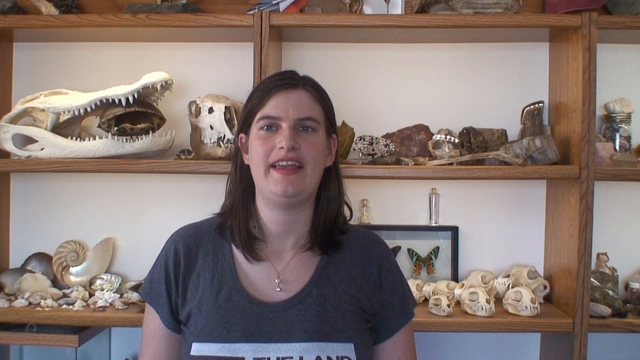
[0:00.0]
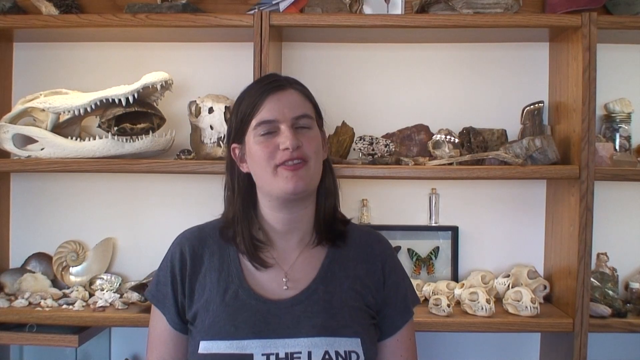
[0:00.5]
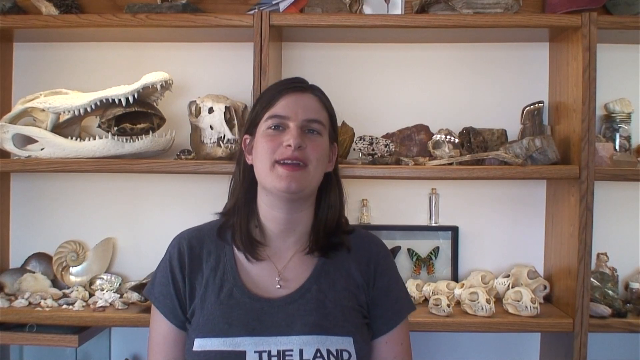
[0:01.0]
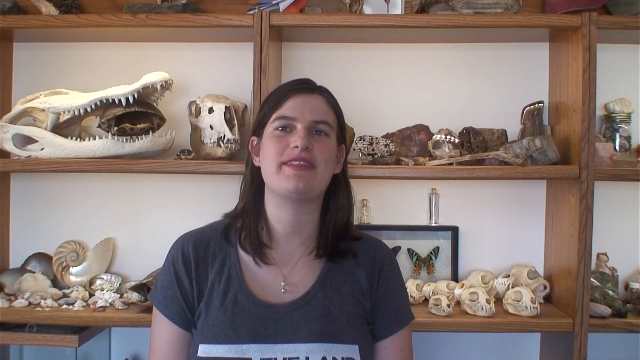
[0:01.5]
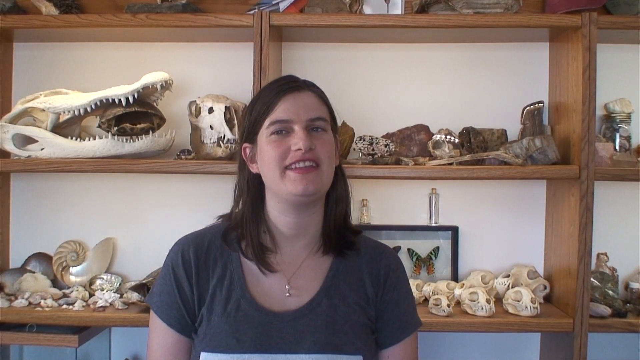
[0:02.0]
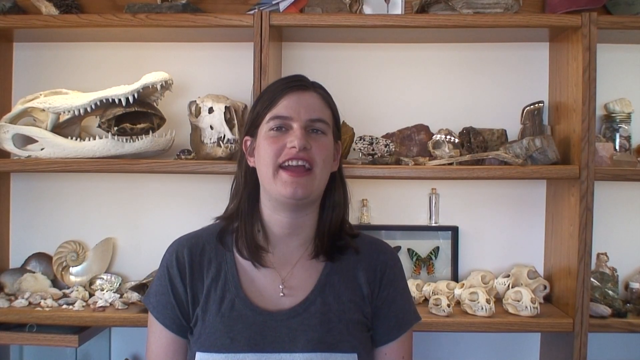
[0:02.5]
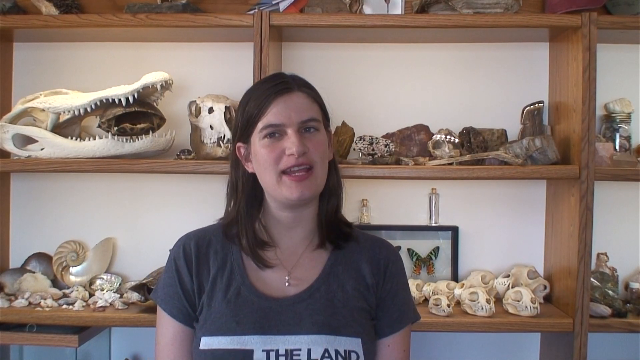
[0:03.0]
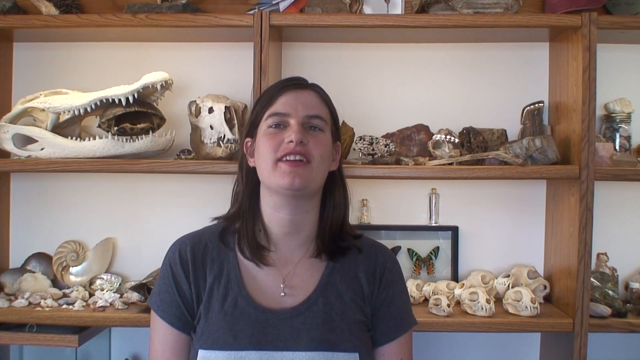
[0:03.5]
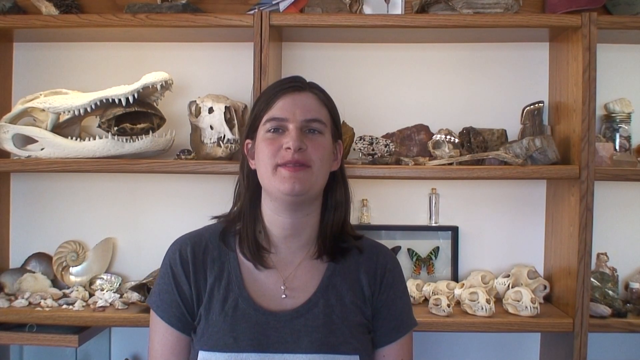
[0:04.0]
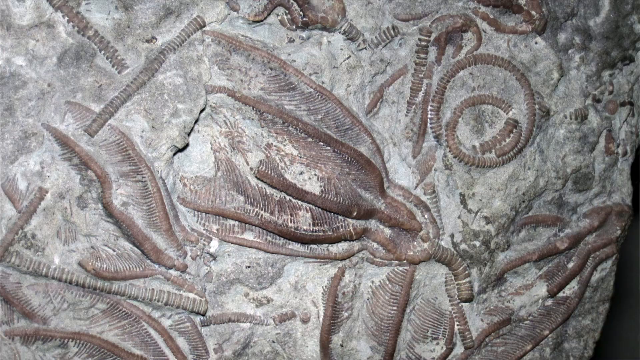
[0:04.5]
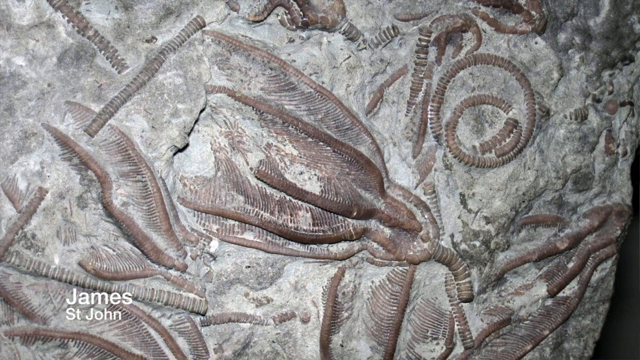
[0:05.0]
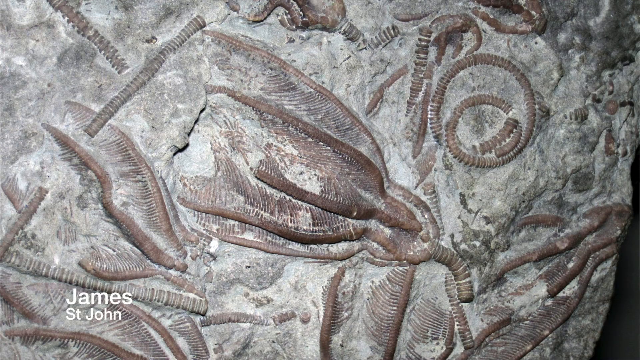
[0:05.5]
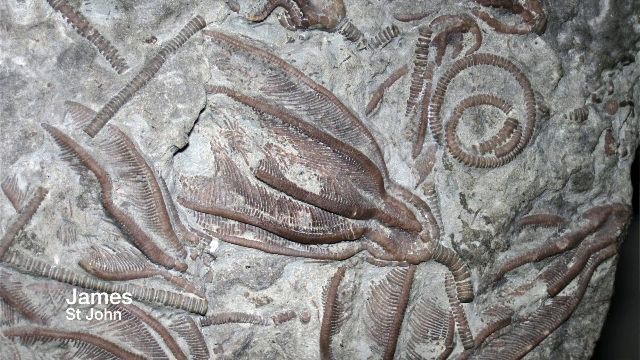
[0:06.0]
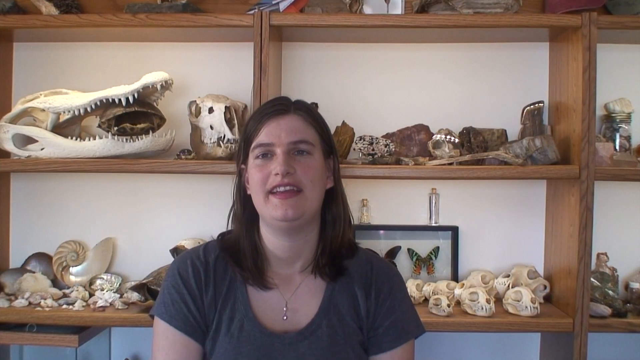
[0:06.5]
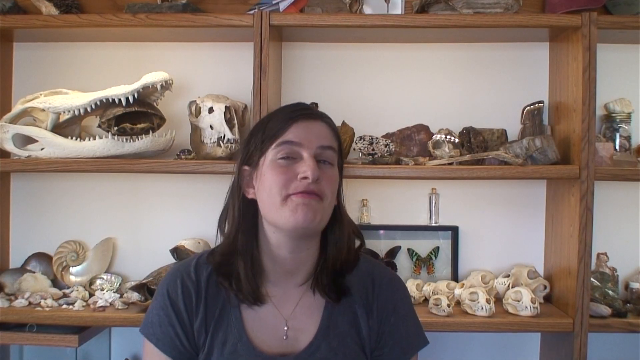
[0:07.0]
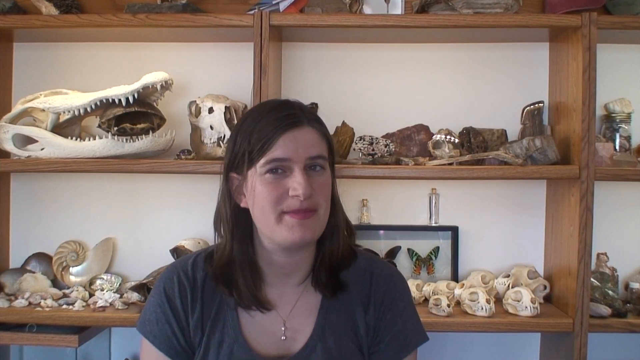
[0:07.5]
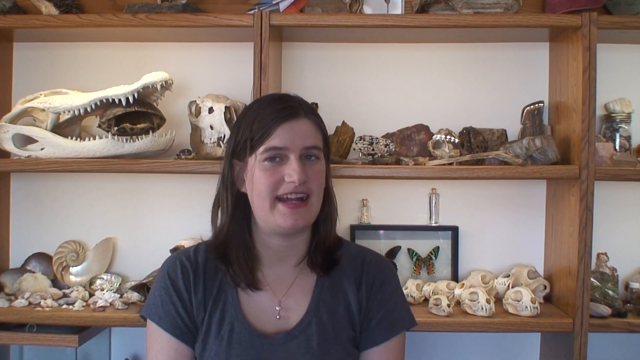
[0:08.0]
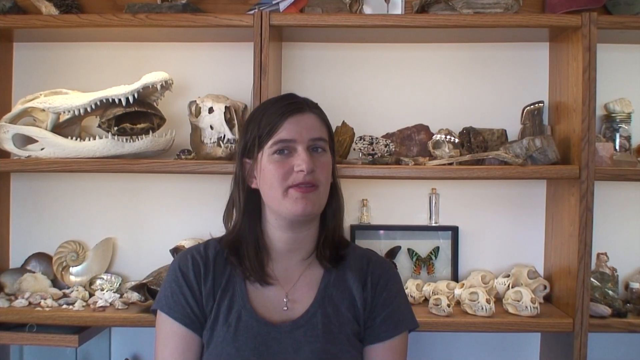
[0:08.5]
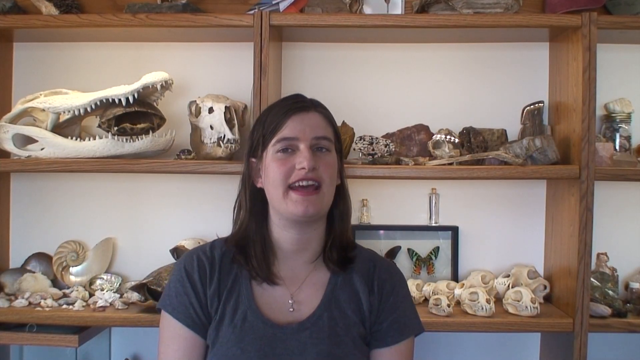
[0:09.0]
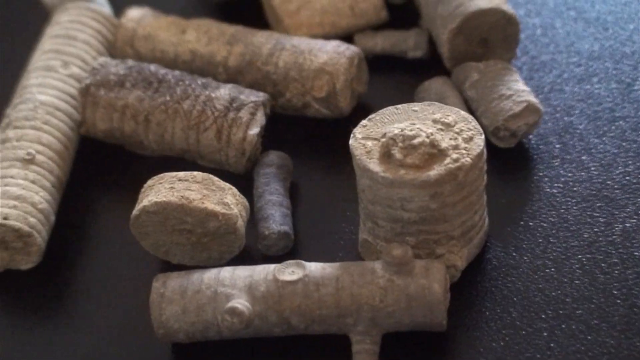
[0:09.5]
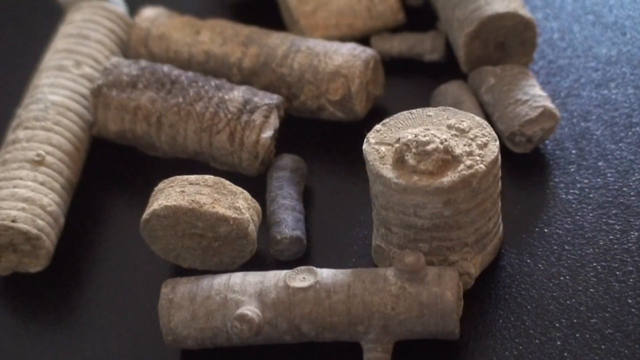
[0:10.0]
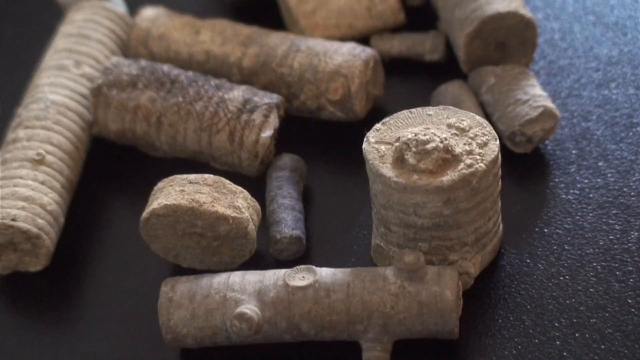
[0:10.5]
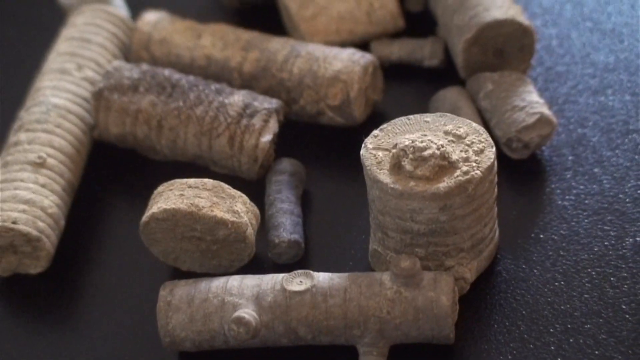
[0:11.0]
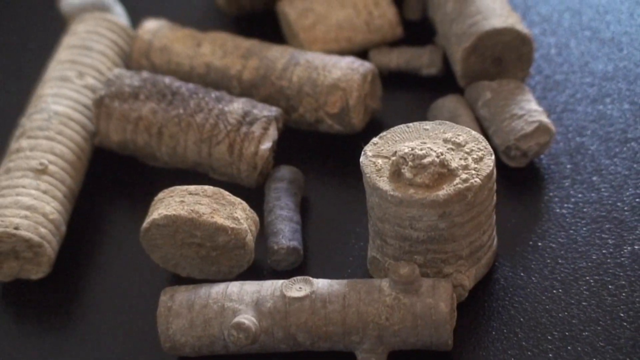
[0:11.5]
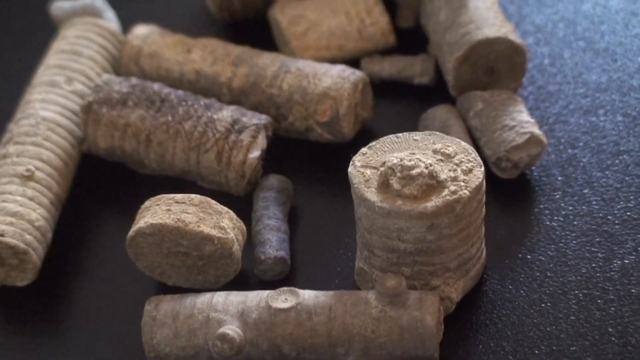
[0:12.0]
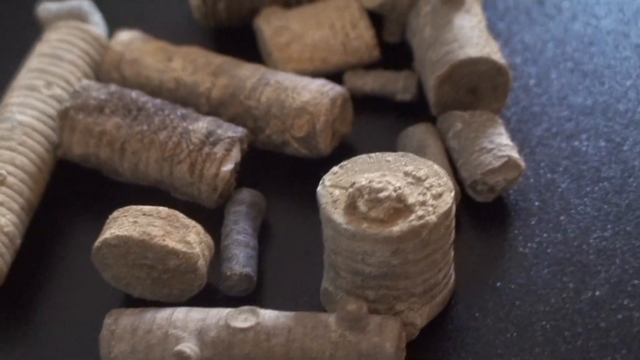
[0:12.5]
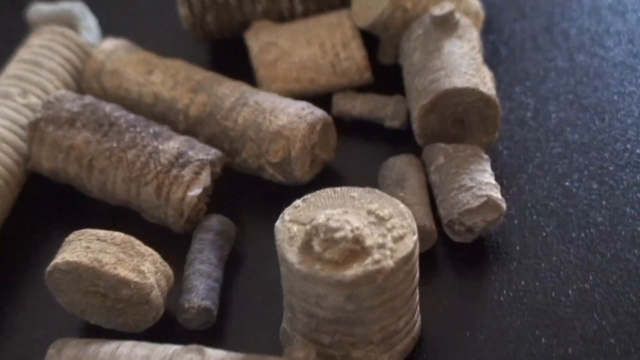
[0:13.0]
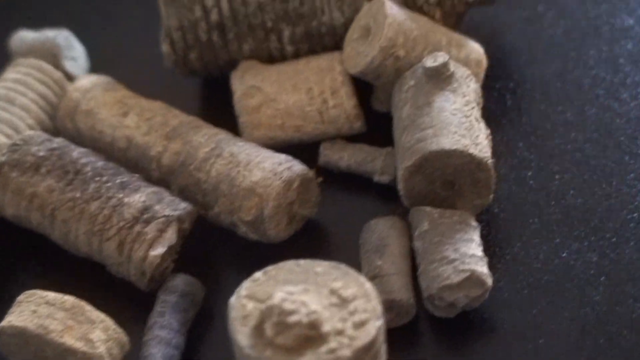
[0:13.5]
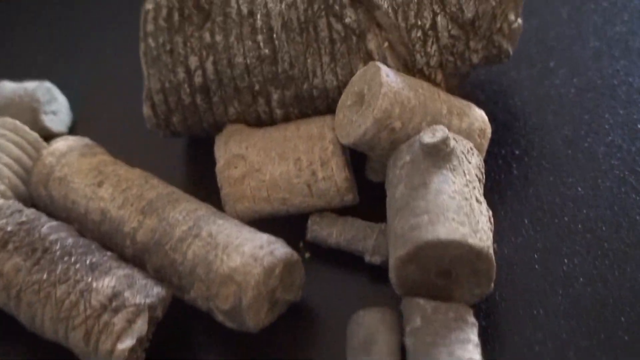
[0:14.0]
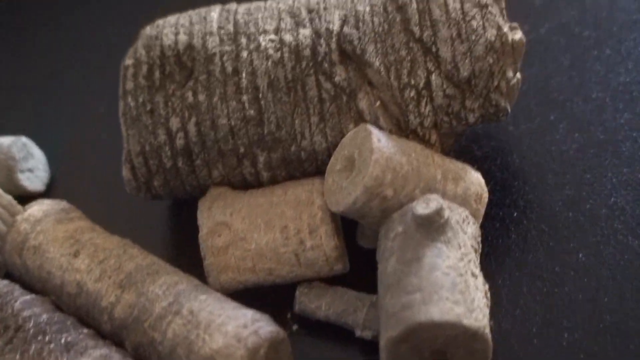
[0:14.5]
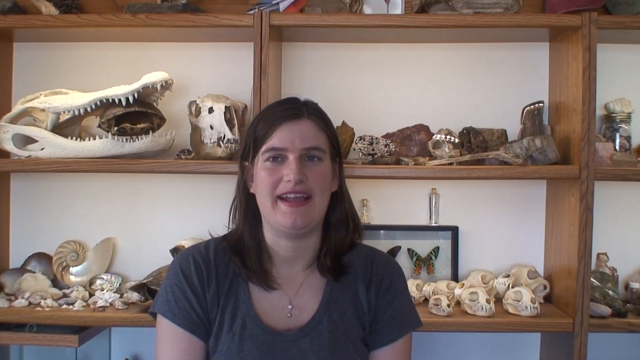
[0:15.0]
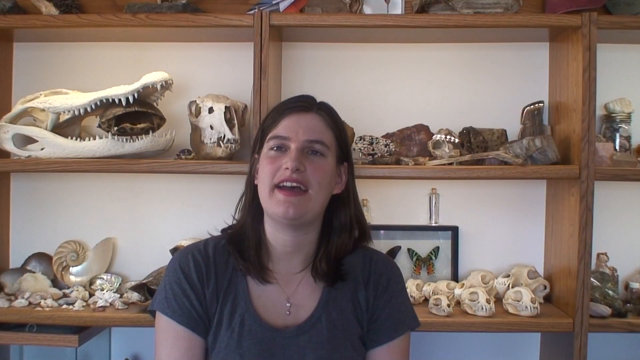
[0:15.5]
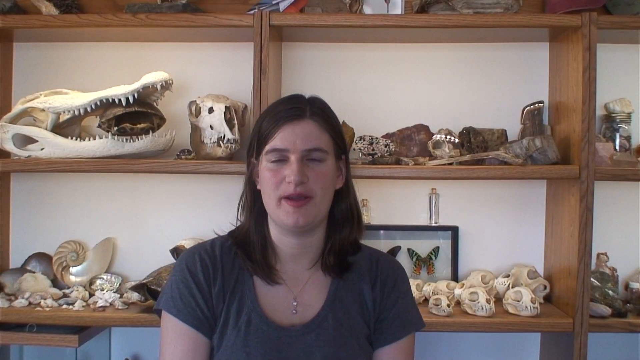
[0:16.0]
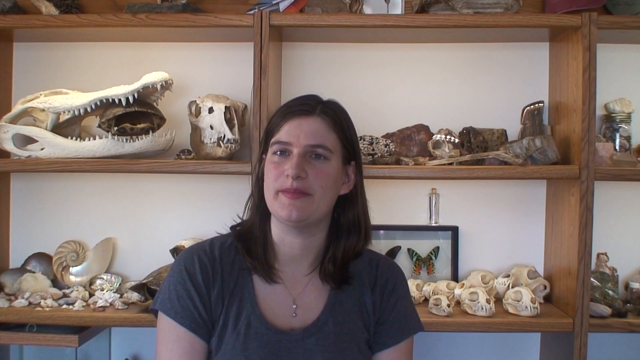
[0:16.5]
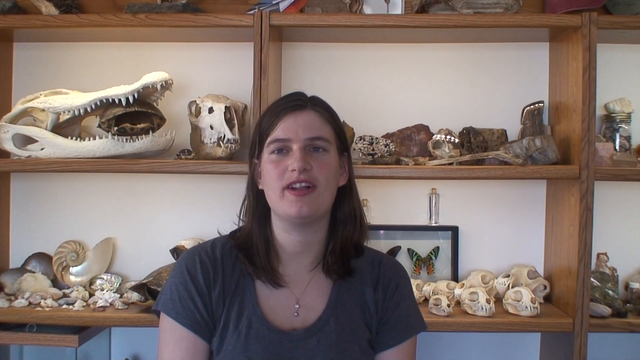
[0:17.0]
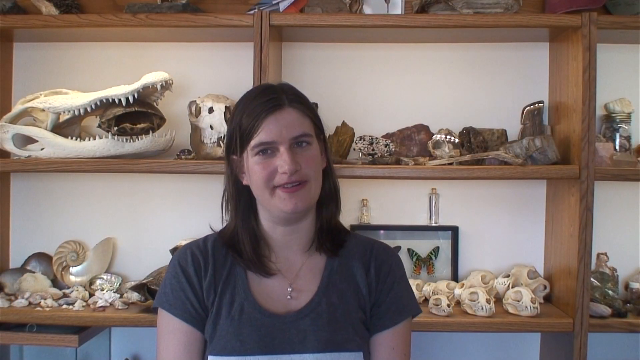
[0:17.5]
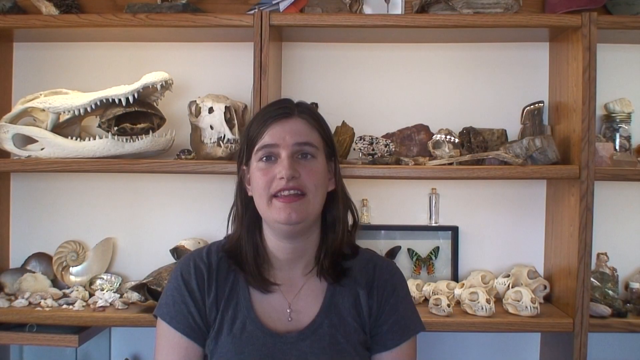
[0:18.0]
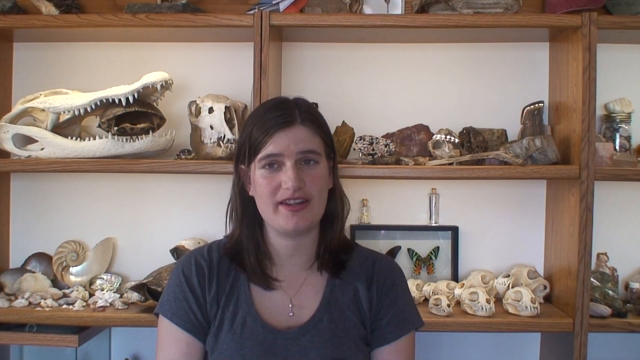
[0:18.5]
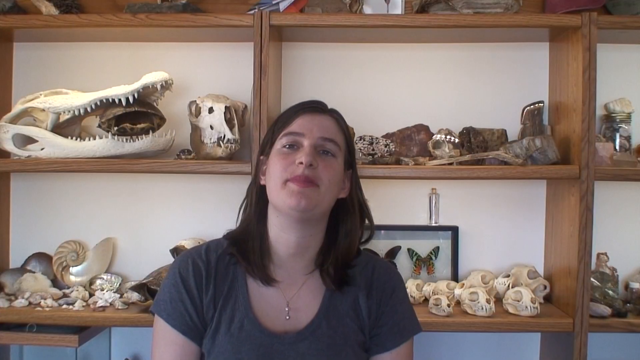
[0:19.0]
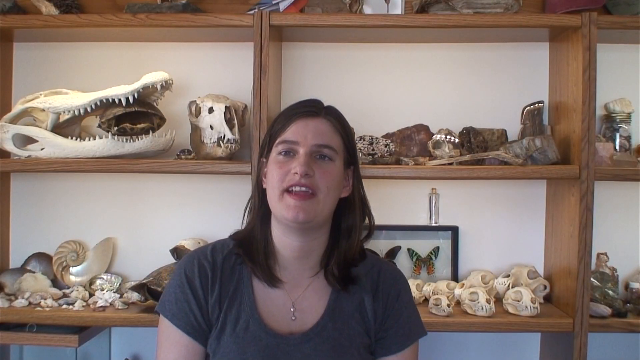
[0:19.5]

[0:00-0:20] A Caucasian woman with pink-toned skin and medium-length straight black hair, wearing a grey scoop-neck t-shirt and a dainty necklace, stands in the middle of the screen. Behind her are wooden shelves holding various fossils, rocks, skulls, preserved bugs and other oddities. She begins to speak while looking at the camera and appears to be in good spirits. The screen transitions to a very large fossil encased in stone, then back to the woman, who continues talking. Next come some crinoid-looking fossils, likely some type of fossilized coral, before the screen returns to the speaker. A white text overlay appears in the upper left of the screen reading "Echino = Spiny".